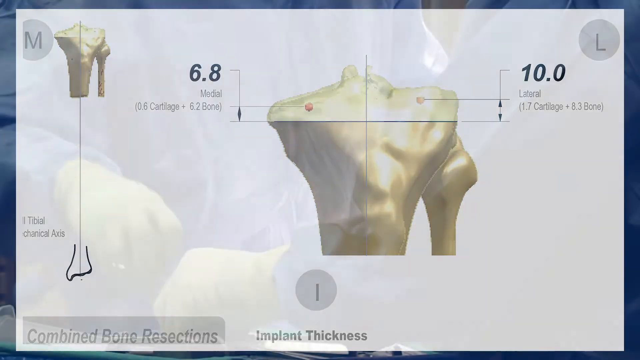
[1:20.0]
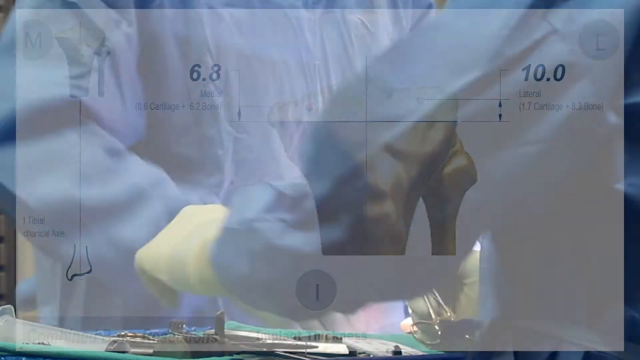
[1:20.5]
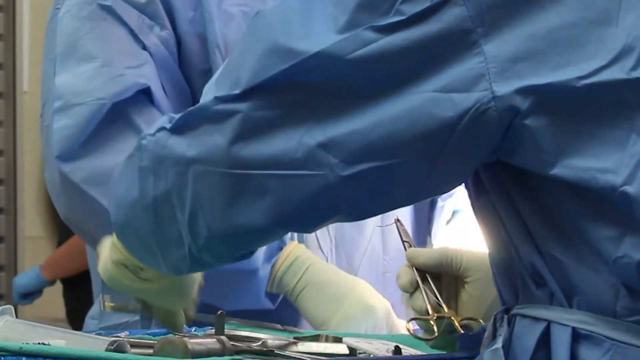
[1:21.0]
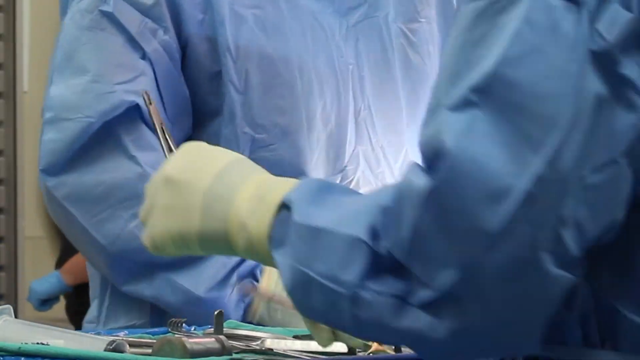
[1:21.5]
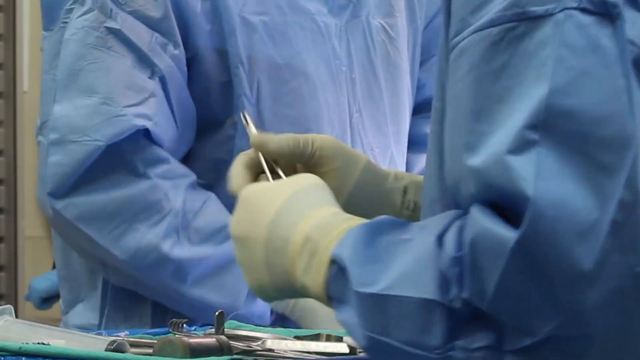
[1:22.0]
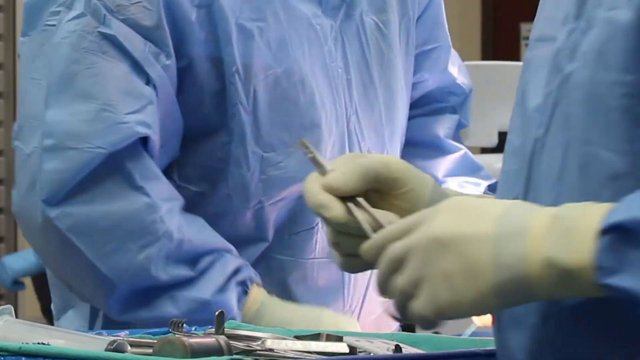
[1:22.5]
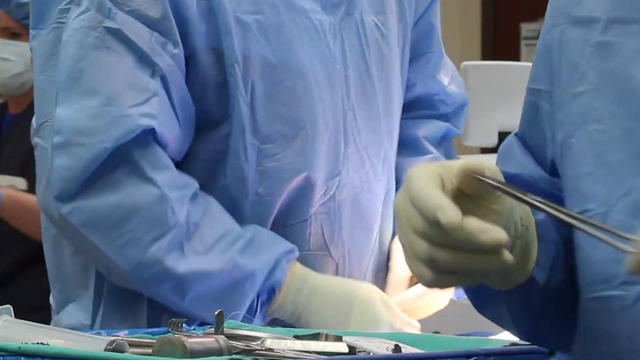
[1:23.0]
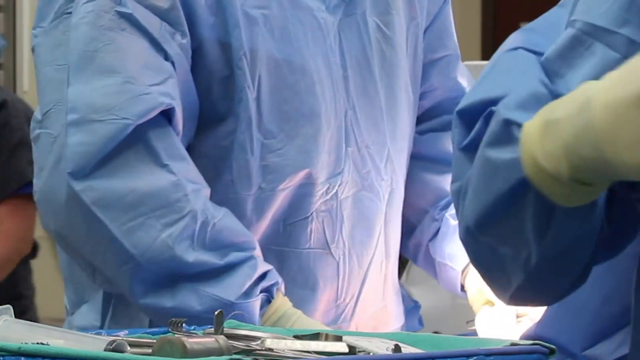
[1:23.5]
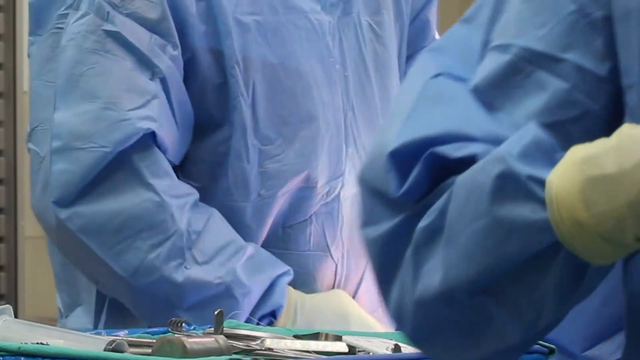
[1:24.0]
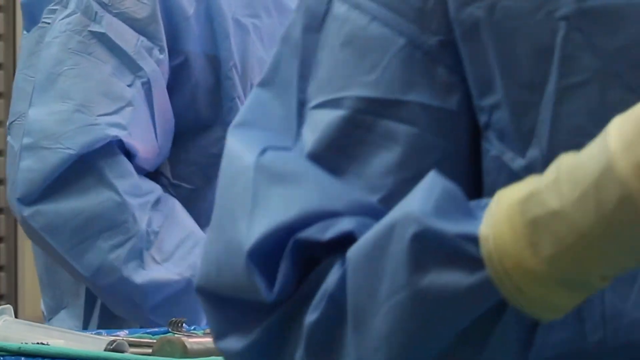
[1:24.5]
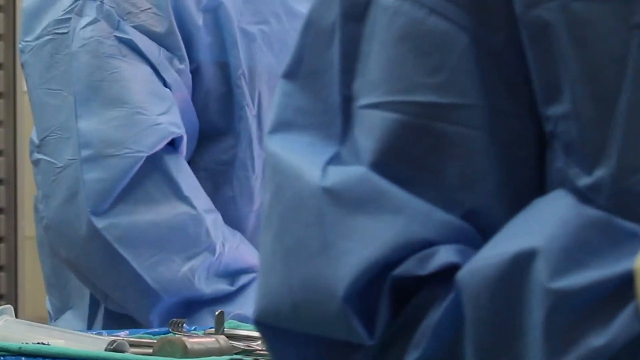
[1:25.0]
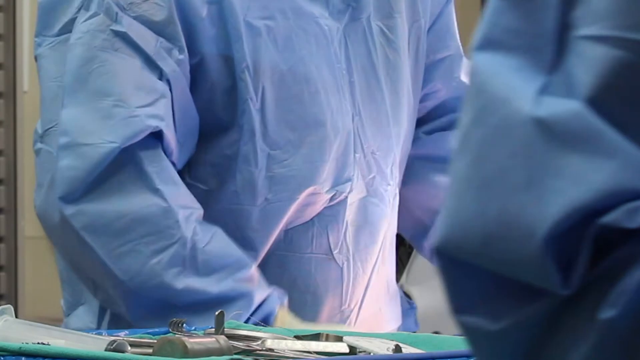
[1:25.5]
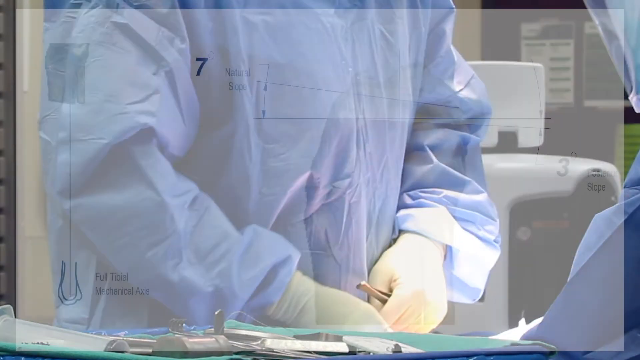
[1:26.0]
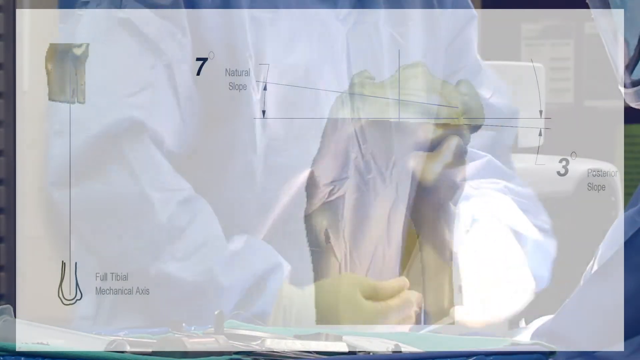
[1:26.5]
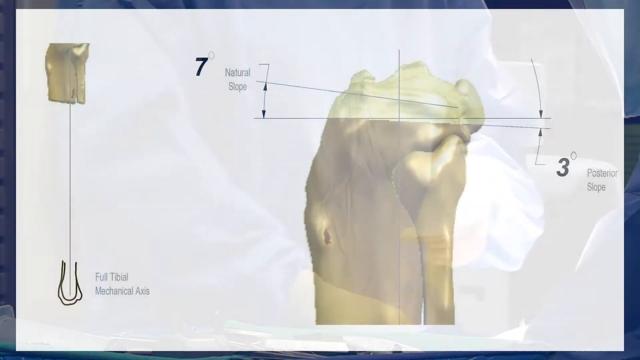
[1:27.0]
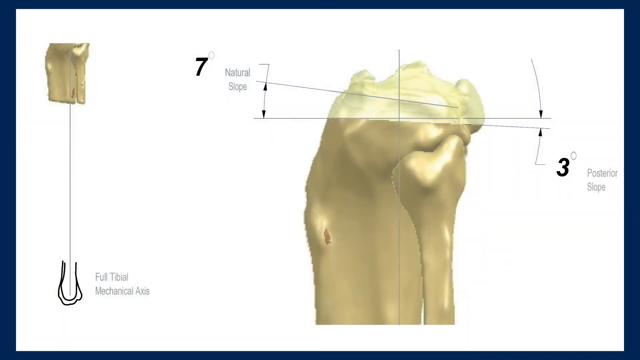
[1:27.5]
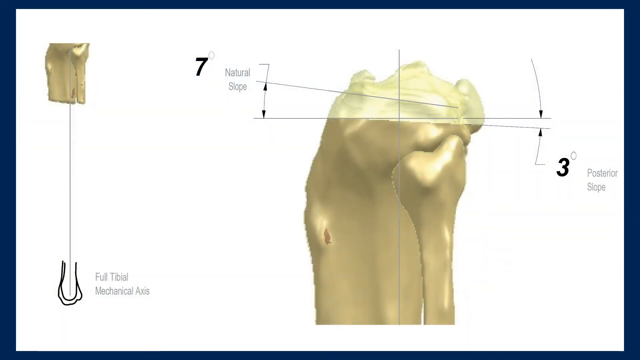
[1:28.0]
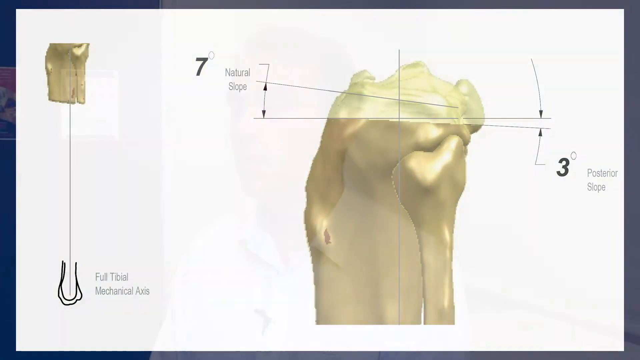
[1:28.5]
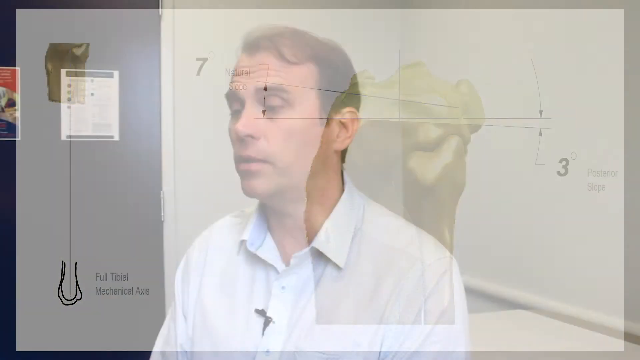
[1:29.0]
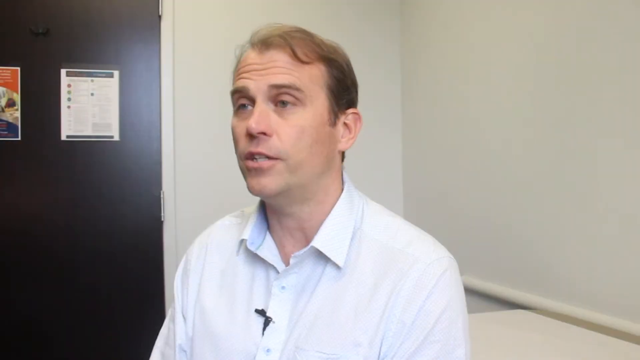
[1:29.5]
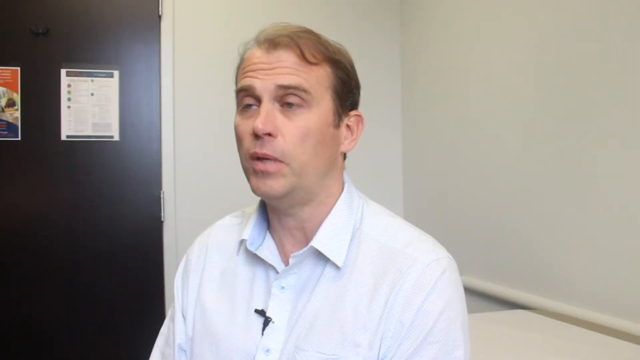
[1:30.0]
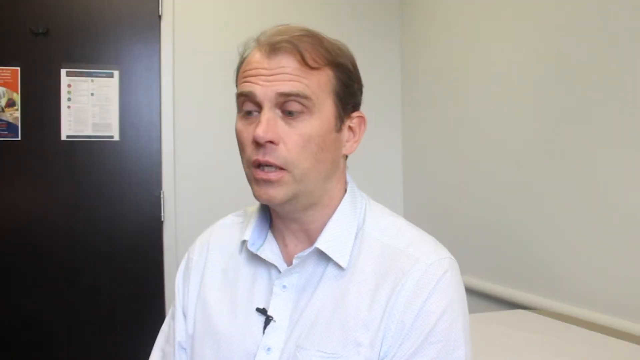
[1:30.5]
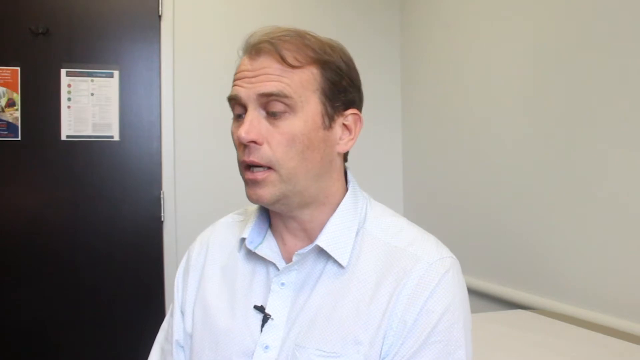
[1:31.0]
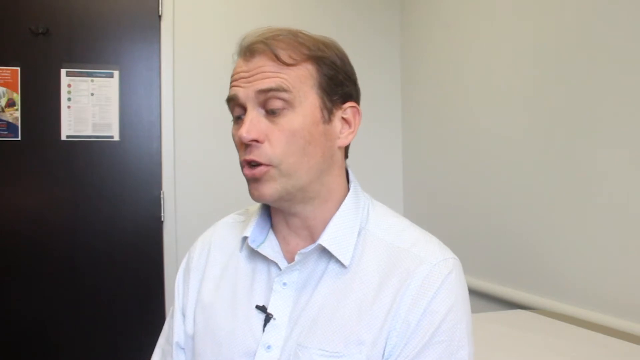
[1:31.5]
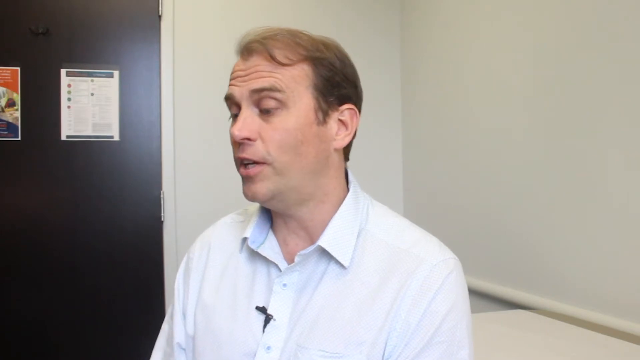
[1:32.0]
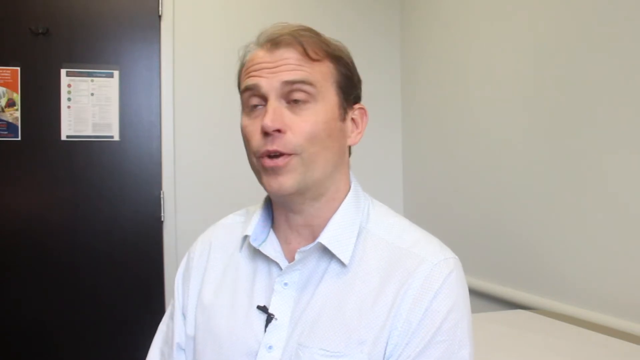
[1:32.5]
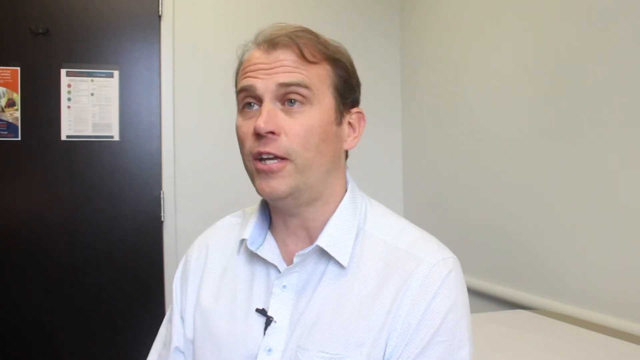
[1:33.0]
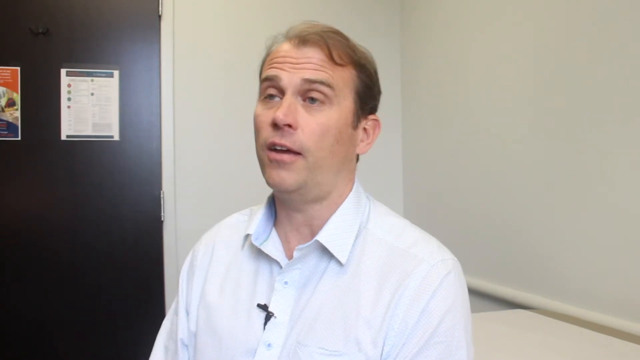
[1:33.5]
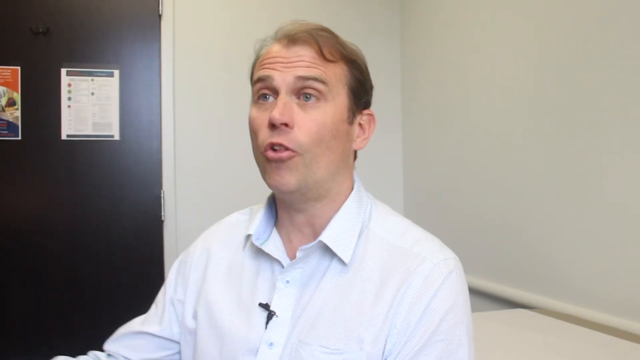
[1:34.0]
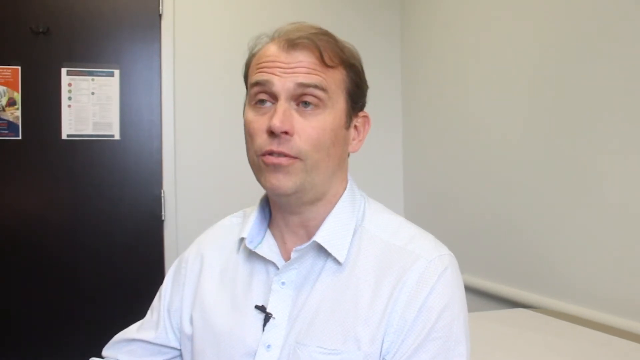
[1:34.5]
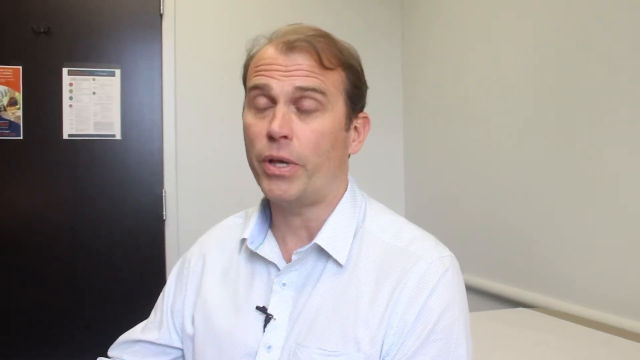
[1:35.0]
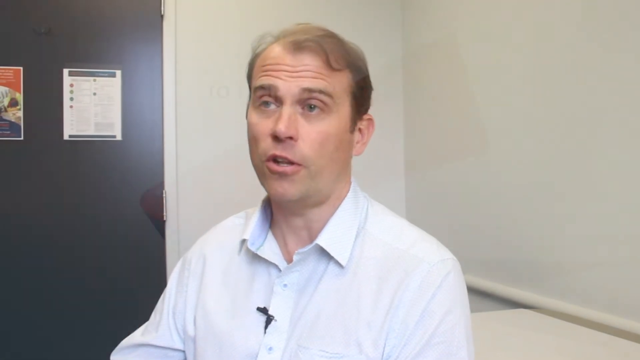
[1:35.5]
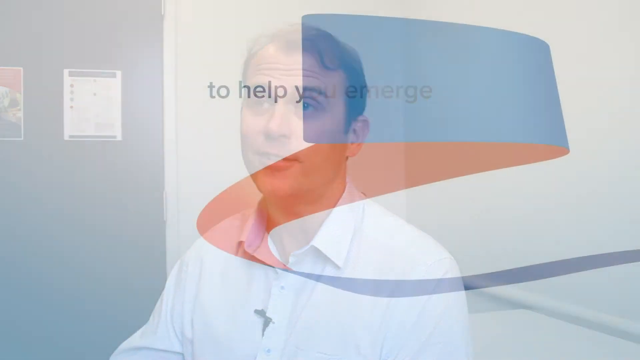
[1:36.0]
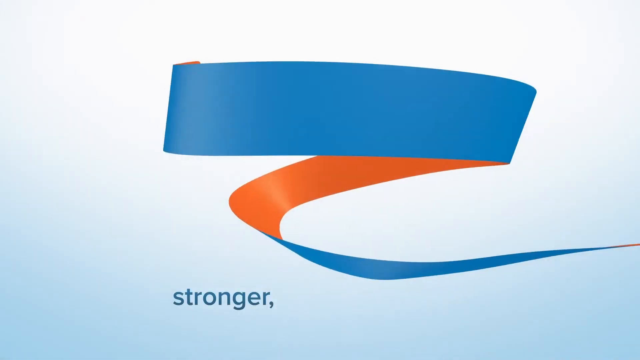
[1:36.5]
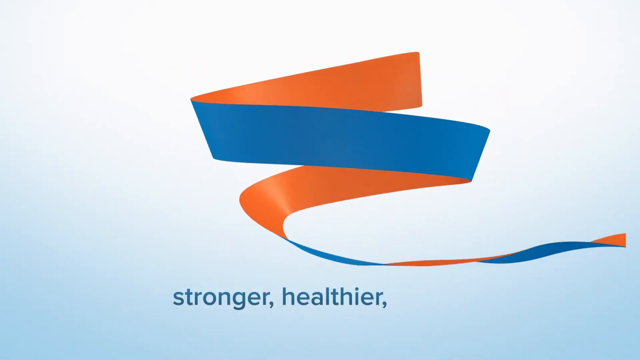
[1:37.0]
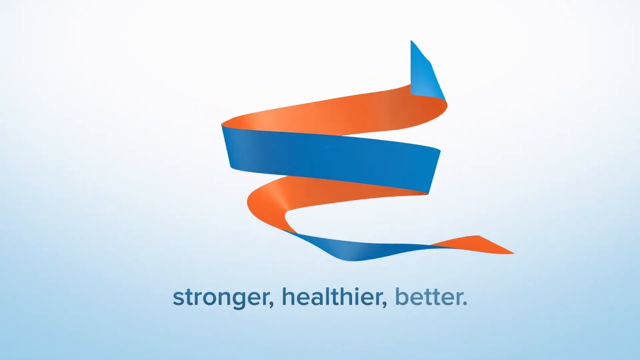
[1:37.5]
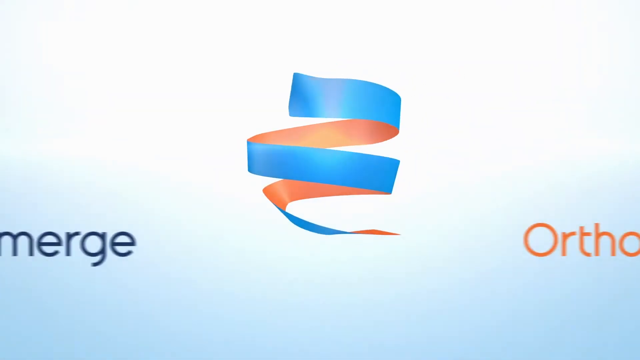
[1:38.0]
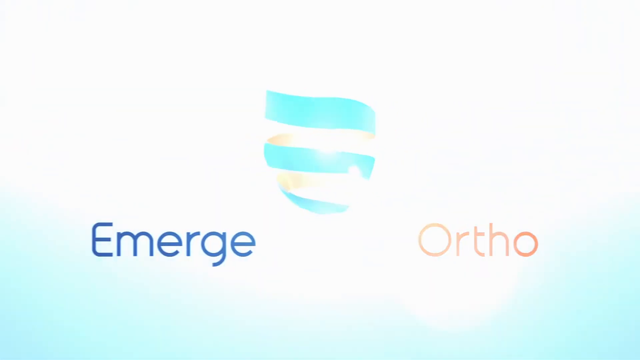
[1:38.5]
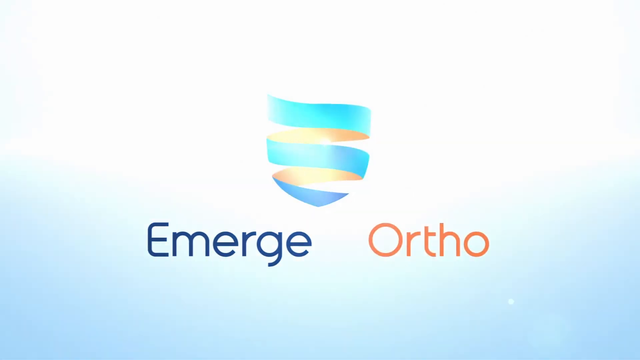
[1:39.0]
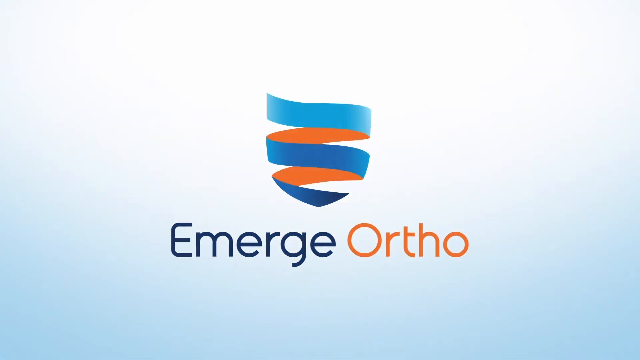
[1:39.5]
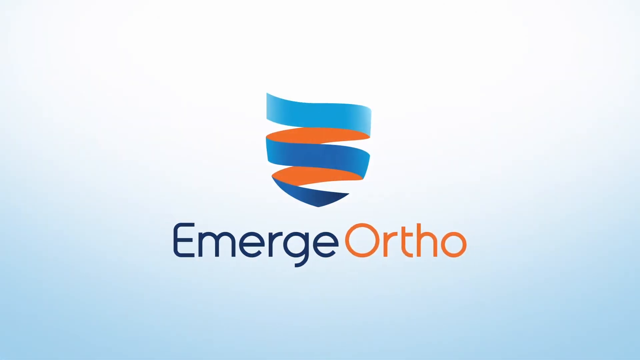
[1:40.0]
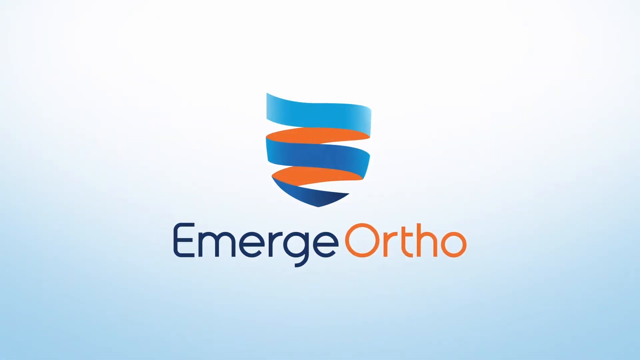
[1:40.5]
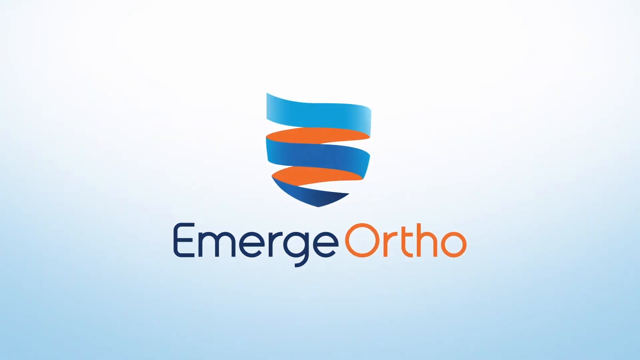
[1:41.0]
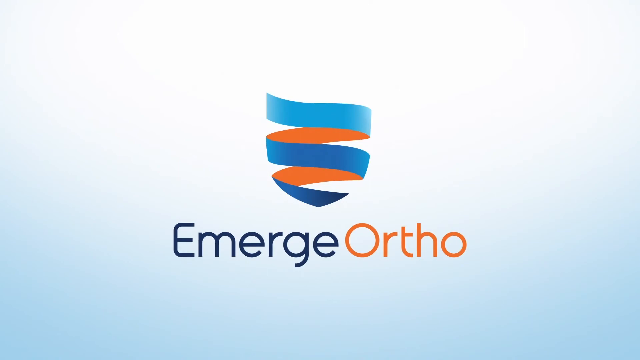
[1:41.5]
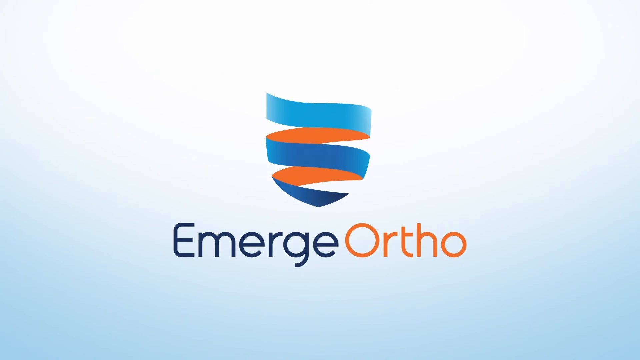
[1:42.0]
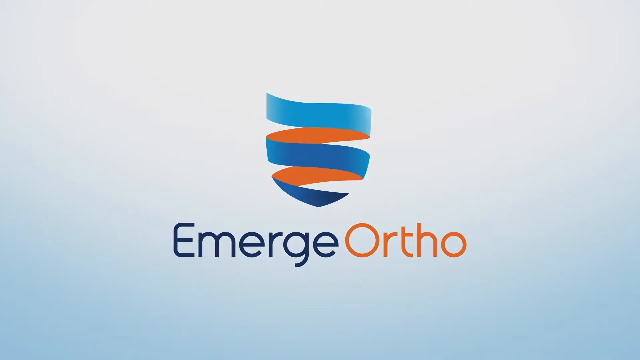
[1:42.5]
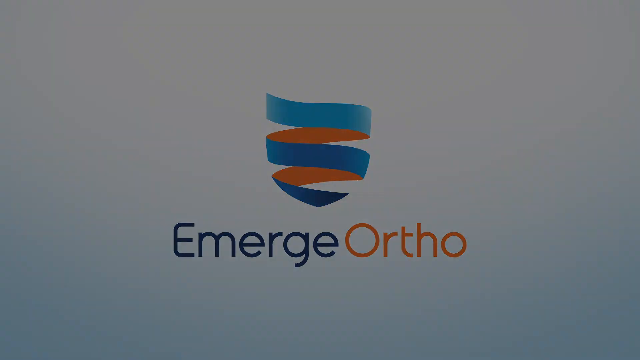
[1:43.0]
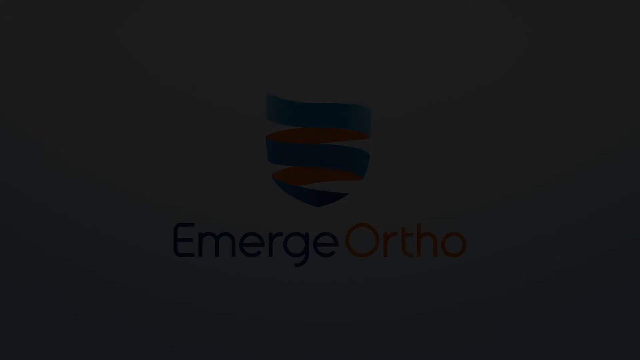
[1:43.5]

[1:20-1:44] A zoomed-in shot shows the doctors from just below their heads to above their waists. A little of the backside of a doctor still wearing blue scrubs is visible, his arm coming down to the left, while another hand comes from in front of him at about waist height. He holds what looks like scissors. The other doctor's hands work in between his, and the view is somewhat from under one doctor's arm. He wraps something up as the other doctor walks off the right side. The video cuts to the bone, running from the bottom upward just right of center, with another little piece of bone in the top left corner and diagrams to its left and right. It then returns to the man sitting in front of the wall, his hands off screen. He looks down, then looks up and raises his eyebrows so his forehead wrinkles, looking somewhat off to the left but forward. The shot fades out to a shield in the center made of a ribbon, dark blue on the front side and orange on the back. It is somewhat flat across the top, goes down the left and right sides and peaks to a point at the bottom. Beneath it, on a white background, "emerge" appears in blue and "ortho" in orange, and the image slowly fades to black.